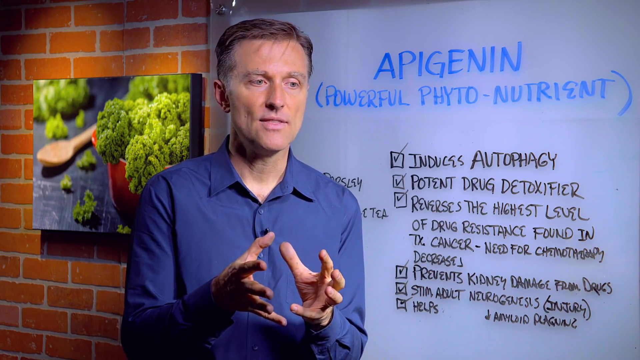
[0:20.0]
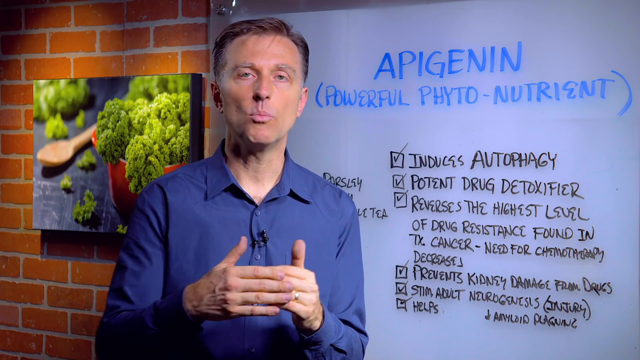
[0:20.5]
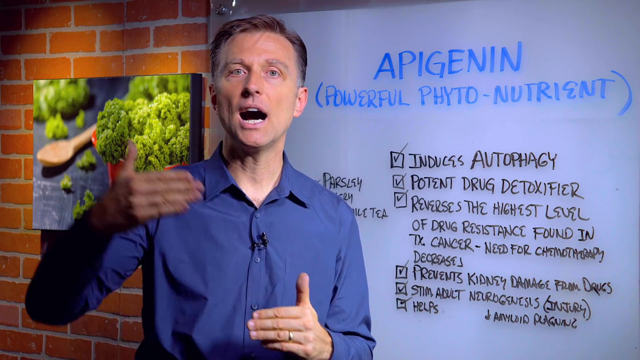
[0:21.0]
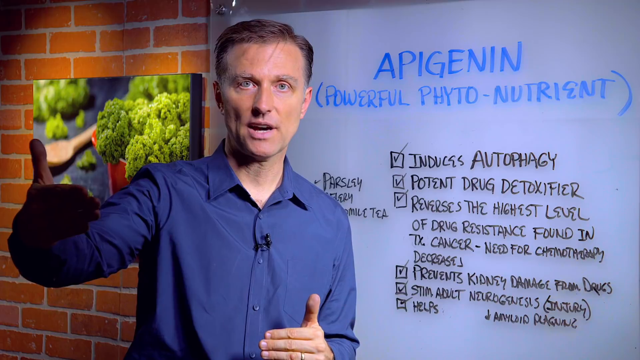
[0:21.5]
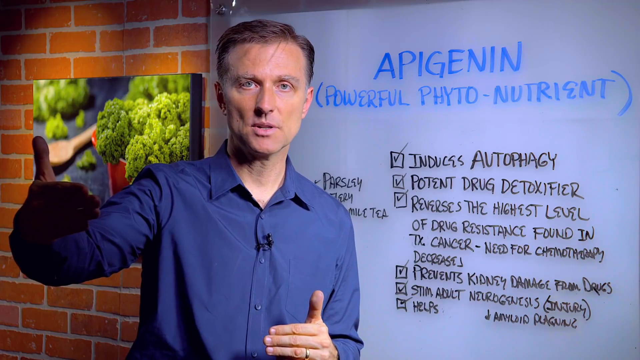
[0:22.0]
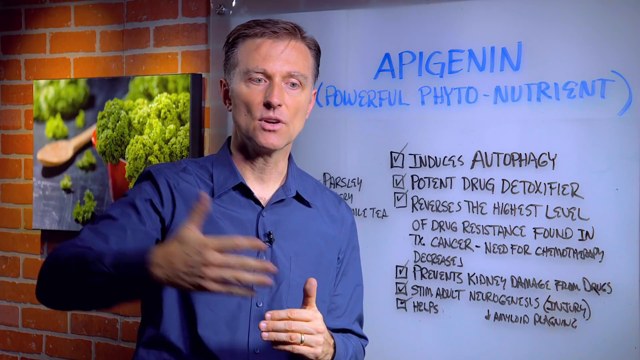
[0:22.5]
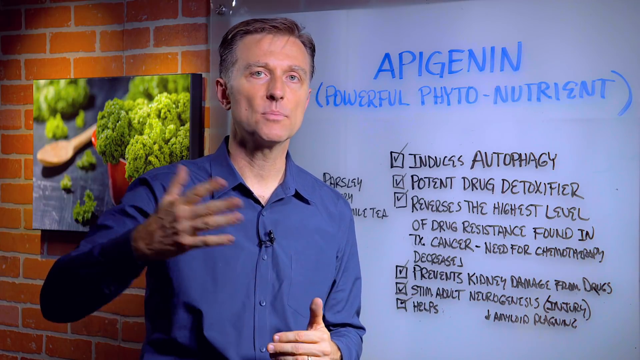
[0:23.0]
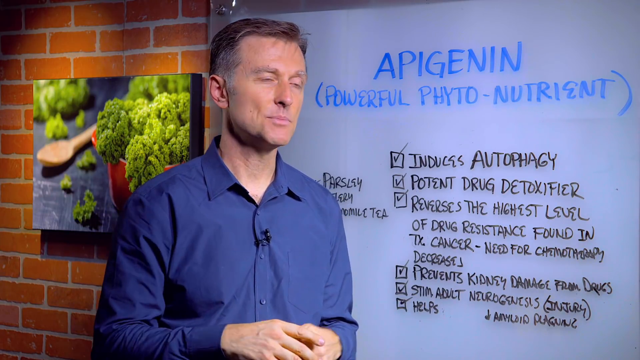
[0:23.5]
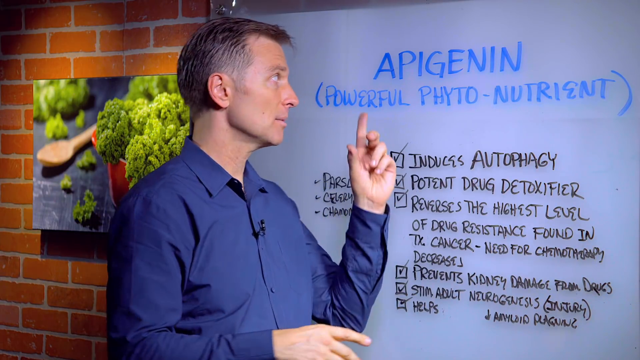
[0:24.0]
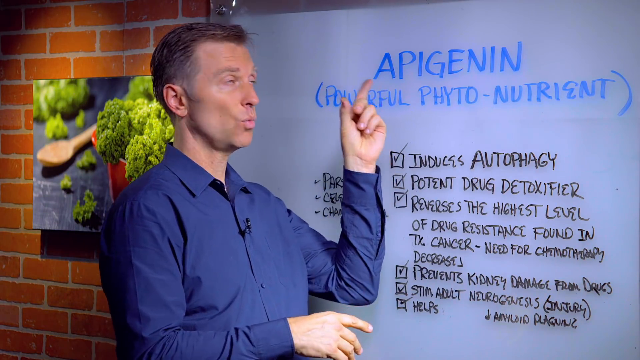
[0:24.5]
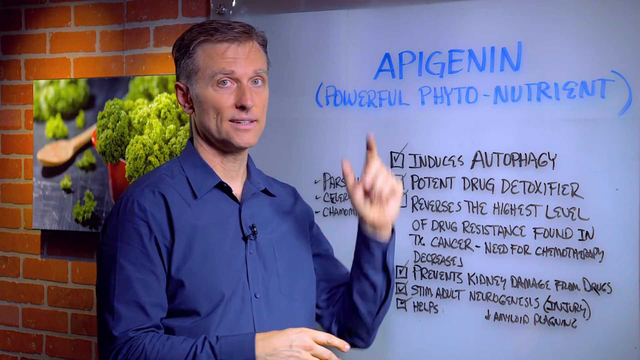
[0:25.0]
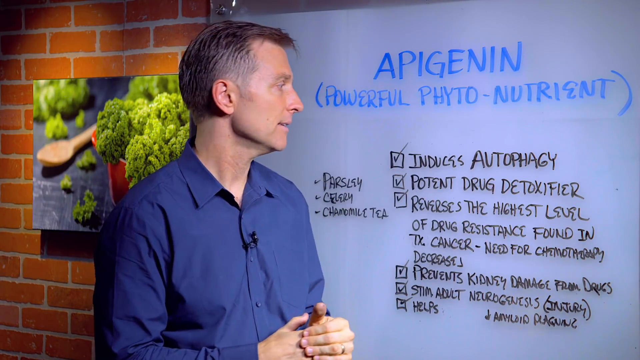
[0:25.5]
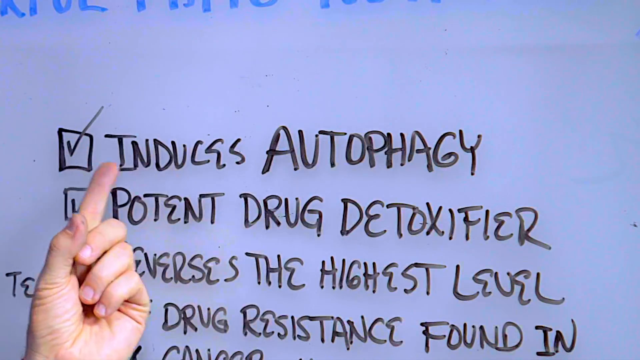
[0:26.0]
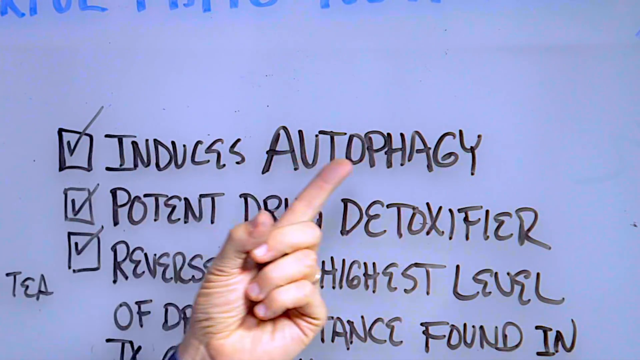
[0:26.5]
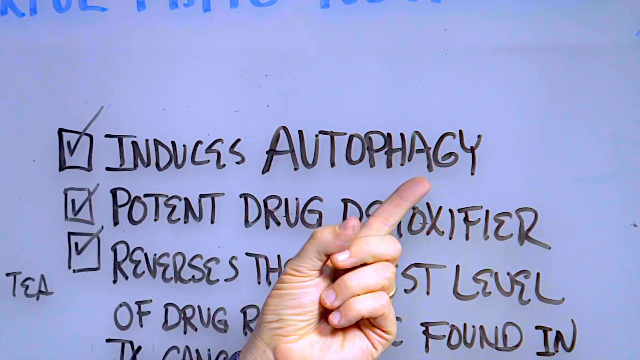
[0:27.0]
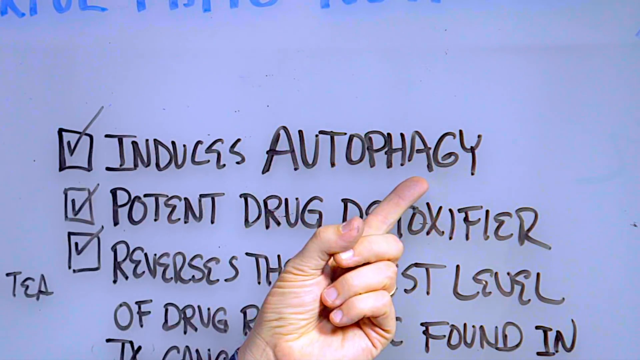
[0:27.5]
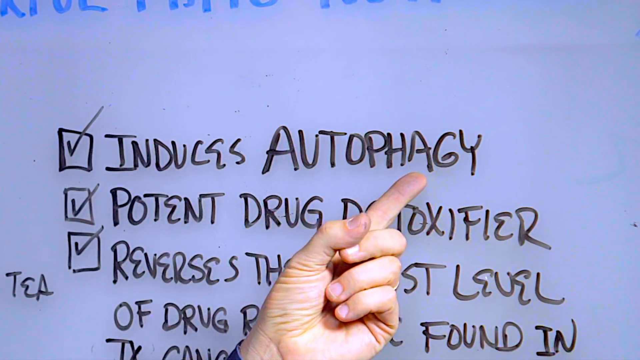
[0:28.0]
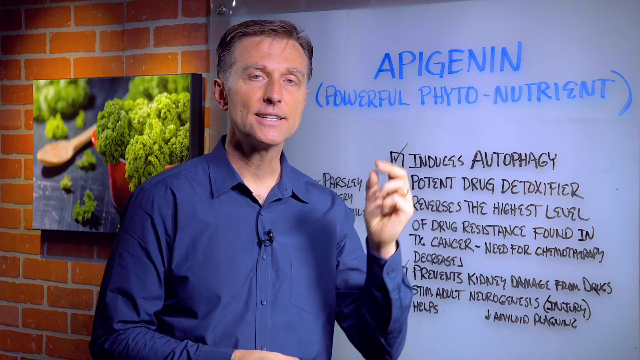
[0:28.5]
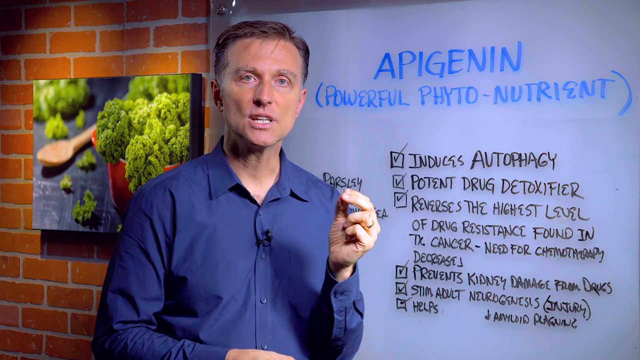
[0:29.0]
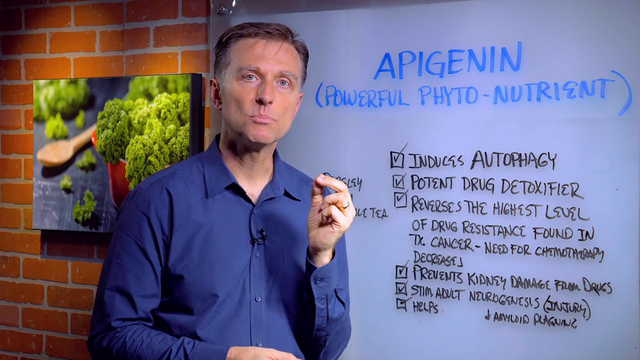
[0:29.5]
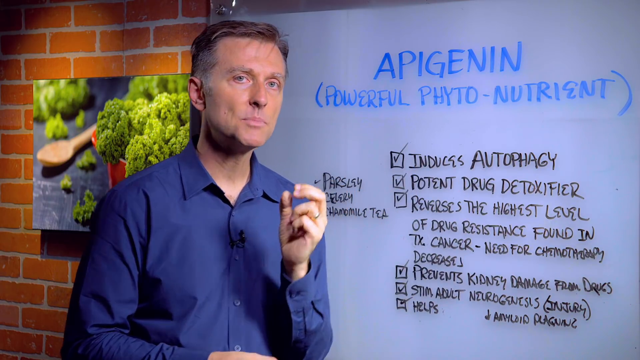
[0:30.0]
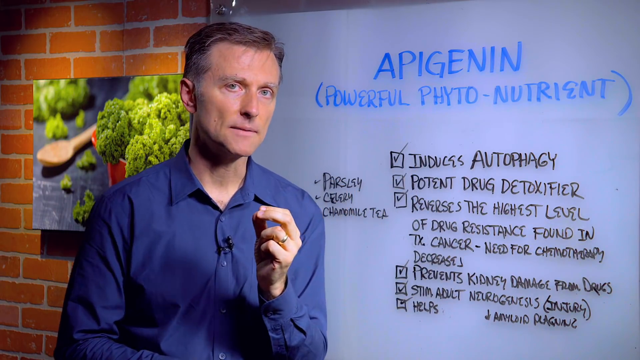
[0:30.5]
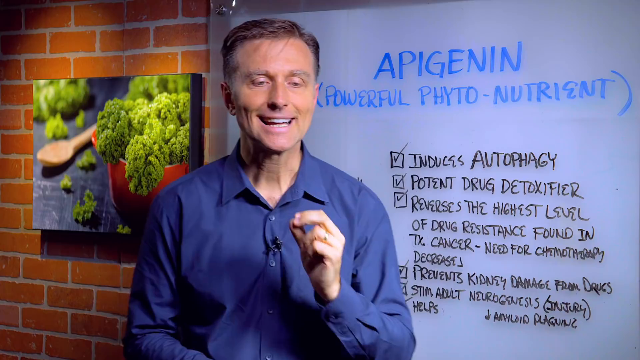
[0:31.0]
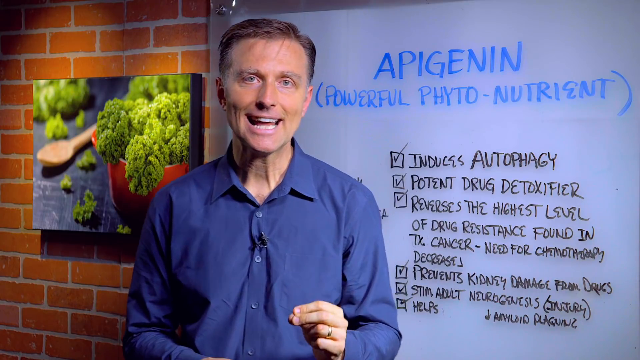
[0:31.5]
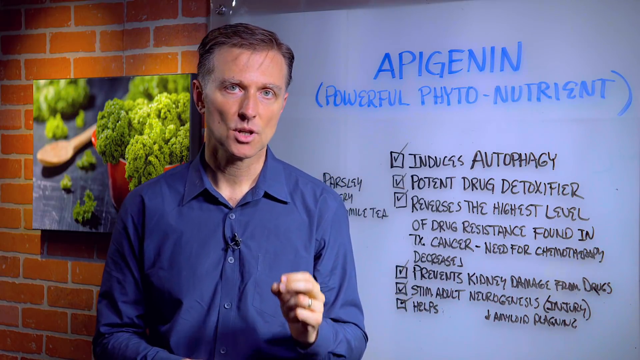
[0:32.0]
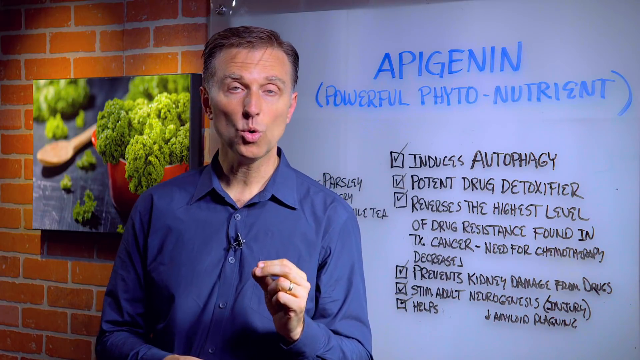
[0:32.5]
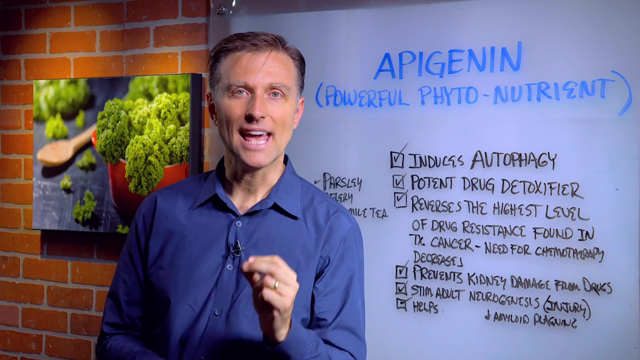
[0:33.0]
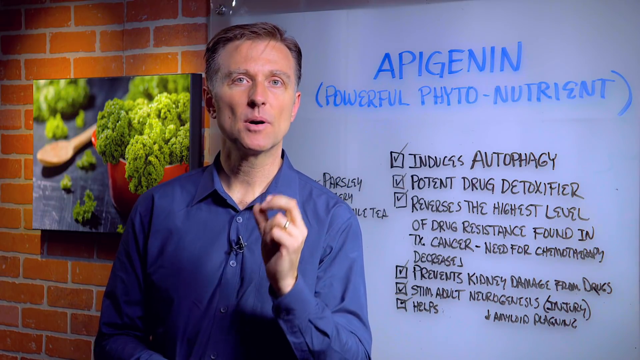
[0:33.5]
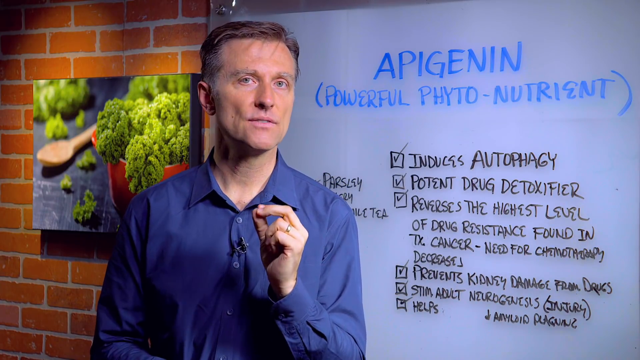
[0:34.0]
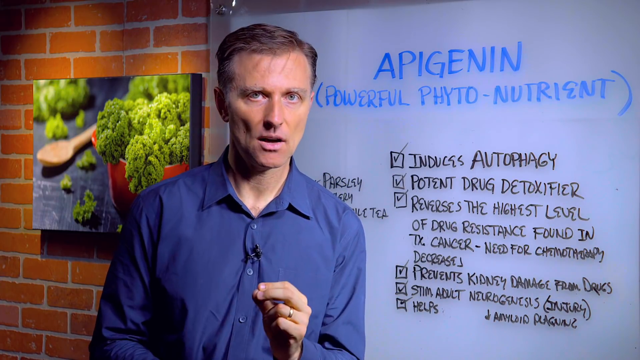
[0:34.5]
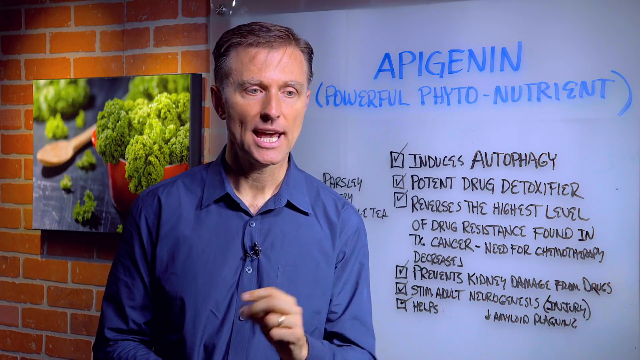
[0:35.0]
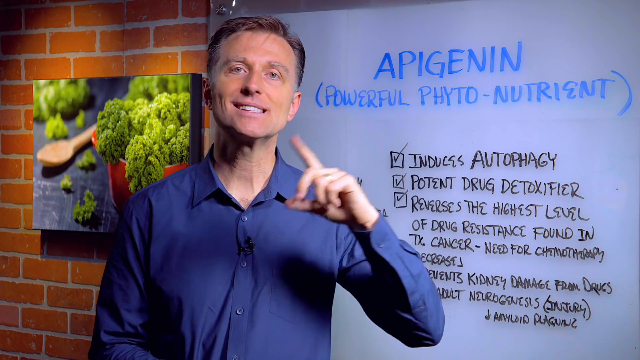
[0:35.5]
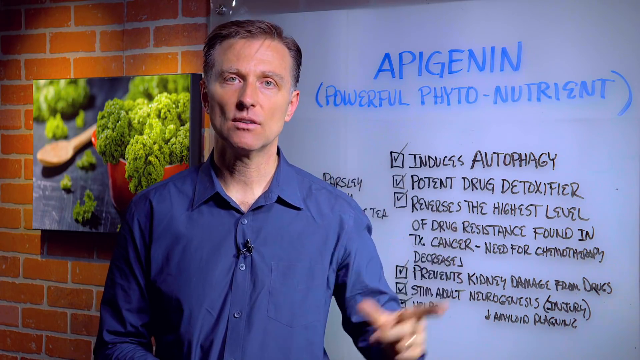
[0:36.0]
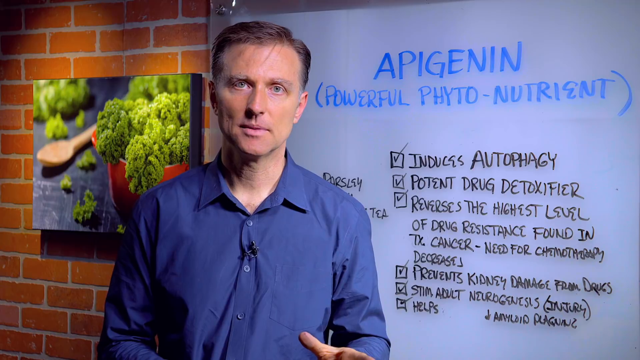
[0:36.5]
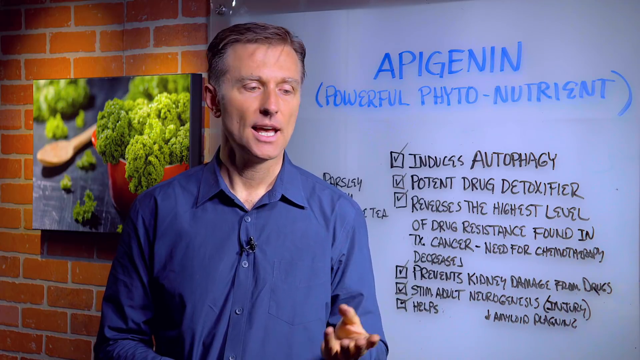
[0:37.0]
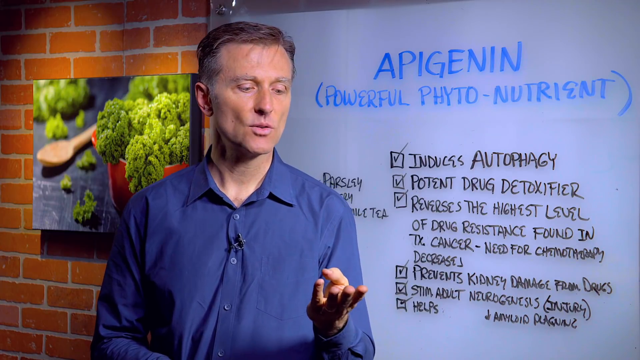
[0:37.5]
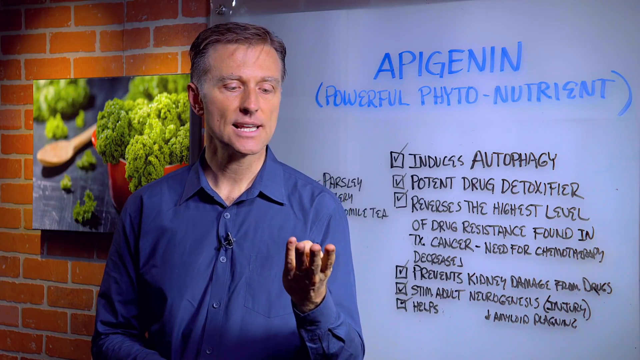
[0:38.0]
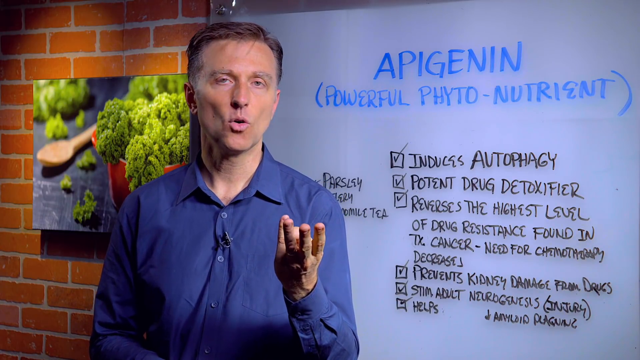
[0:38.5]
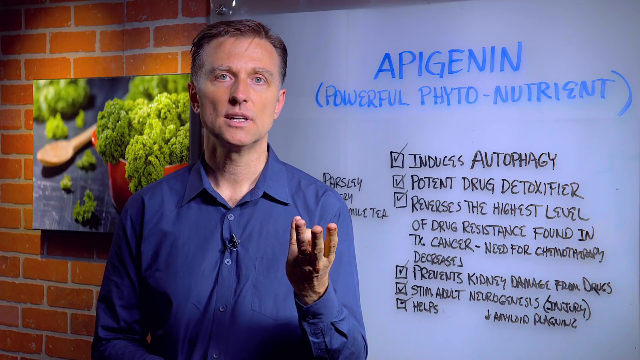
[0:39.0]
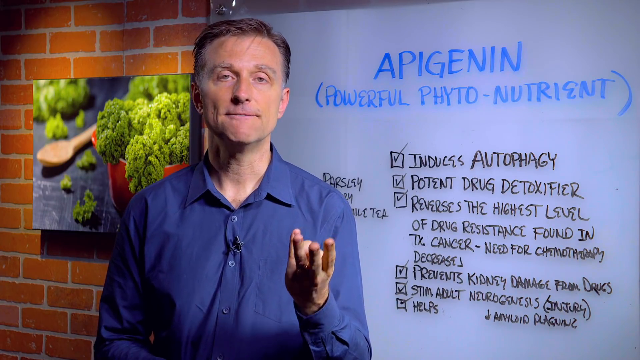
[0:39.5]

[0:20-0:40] The same man speaks to the viewer while pointing to different things on the whiteboard. At first he uses his right hand for emphasis, then uses his left hand to point to "Induces autophagy" on the whiteboard. The video zooms in on the whiteboard so only the first three points are visible, each with a checked box: "Induces autophagy", "Potent drug detoxifier", and "Reverses the highest level of drug resistance found in cancer, need for chemotherapy decreases". He uses his hands often as he talks and keeps making eye contact with the viewer.